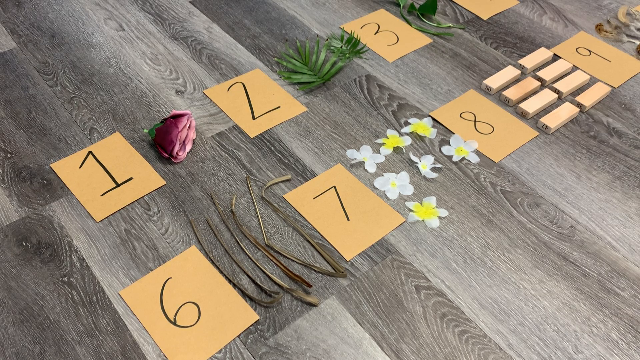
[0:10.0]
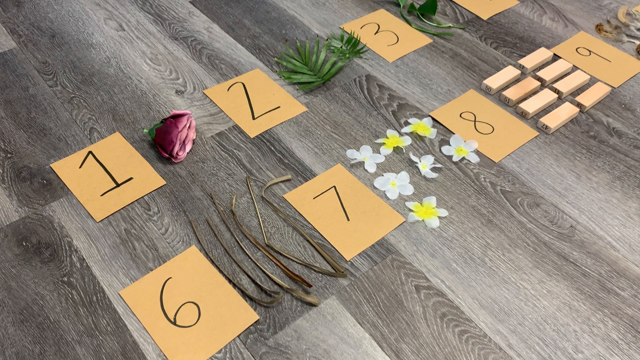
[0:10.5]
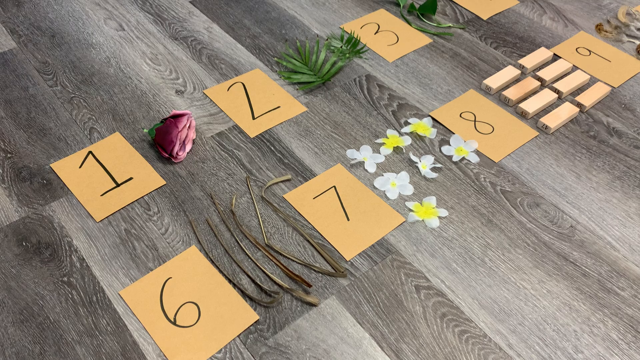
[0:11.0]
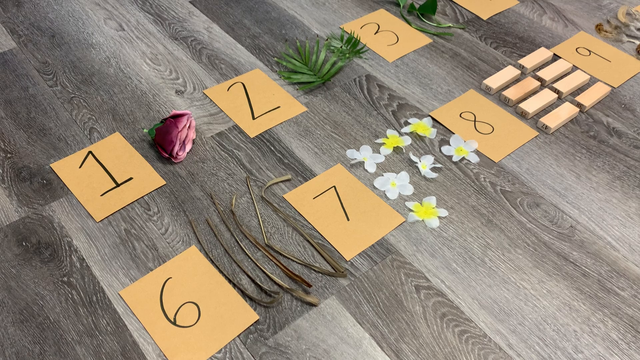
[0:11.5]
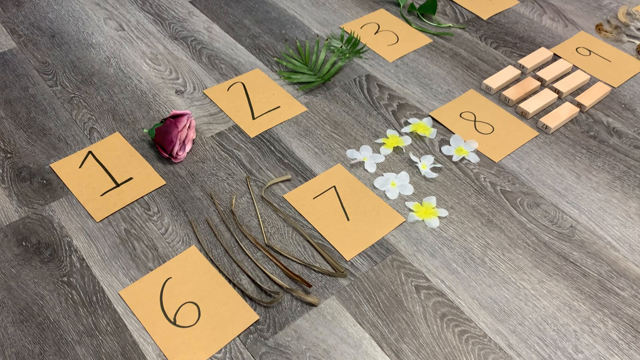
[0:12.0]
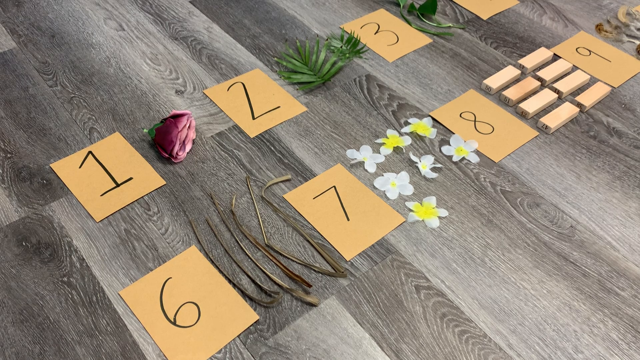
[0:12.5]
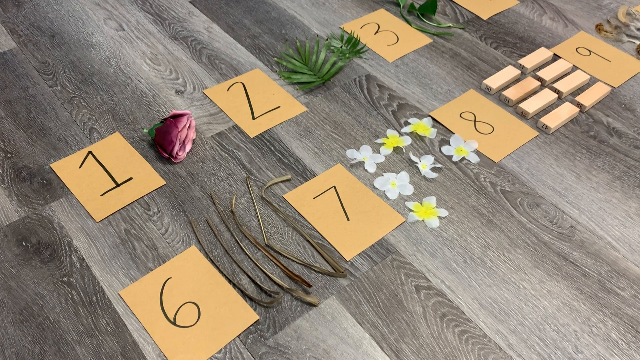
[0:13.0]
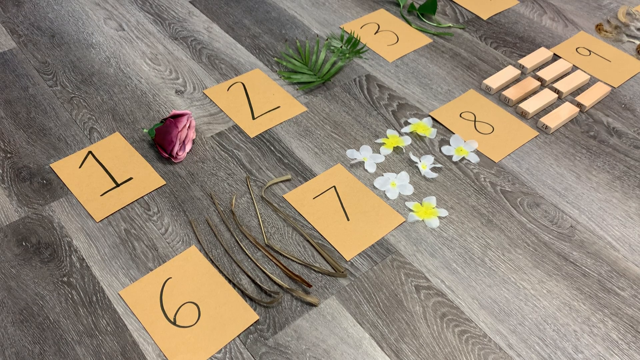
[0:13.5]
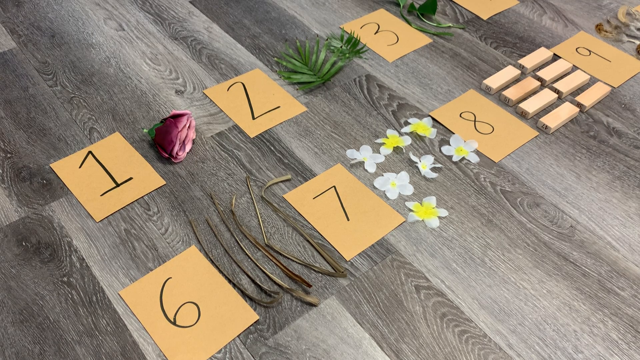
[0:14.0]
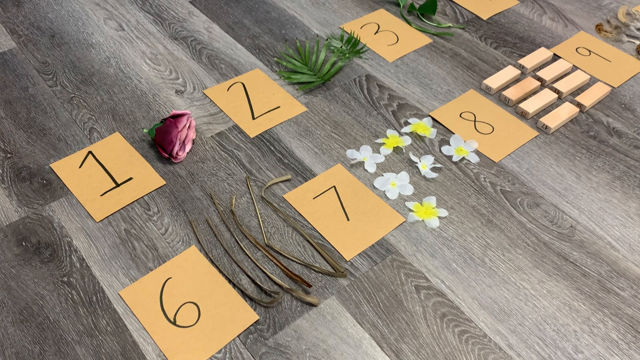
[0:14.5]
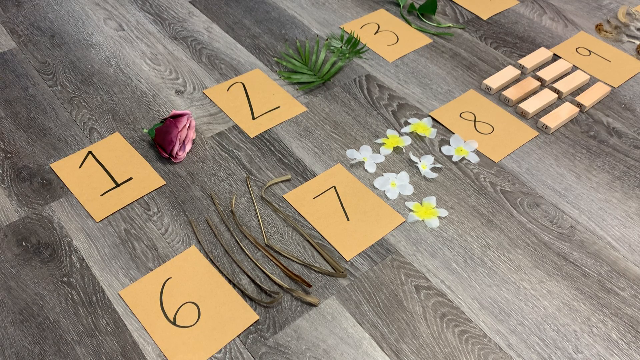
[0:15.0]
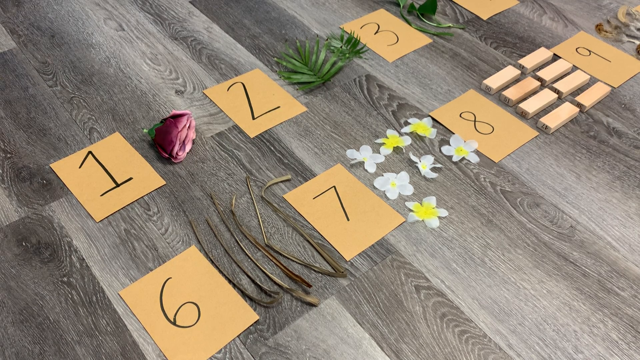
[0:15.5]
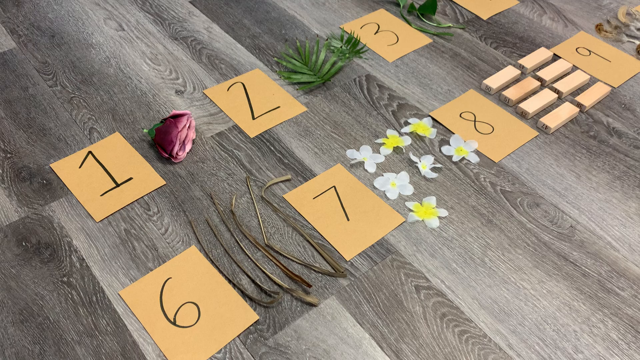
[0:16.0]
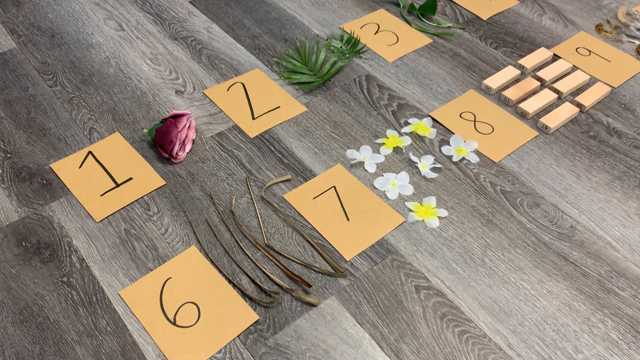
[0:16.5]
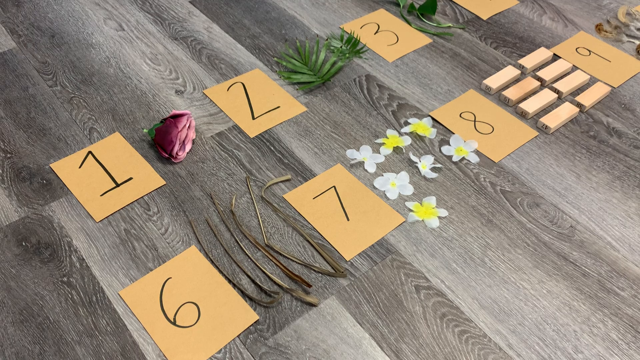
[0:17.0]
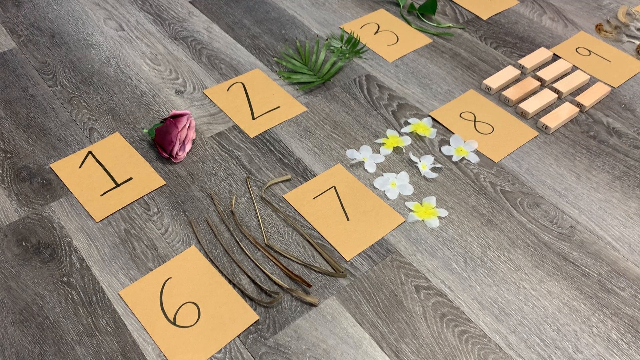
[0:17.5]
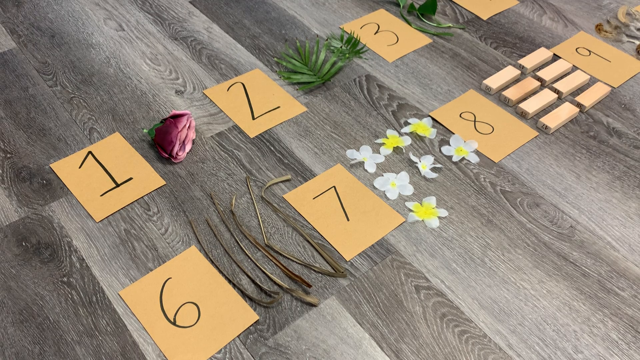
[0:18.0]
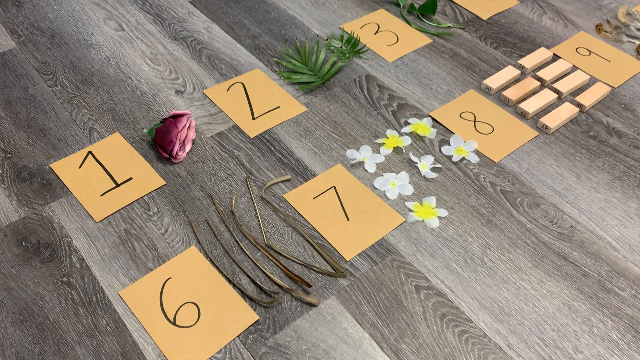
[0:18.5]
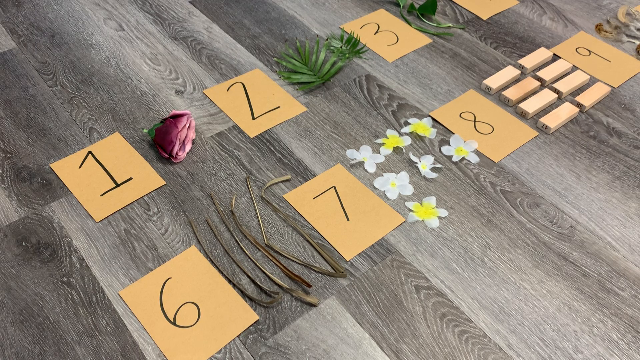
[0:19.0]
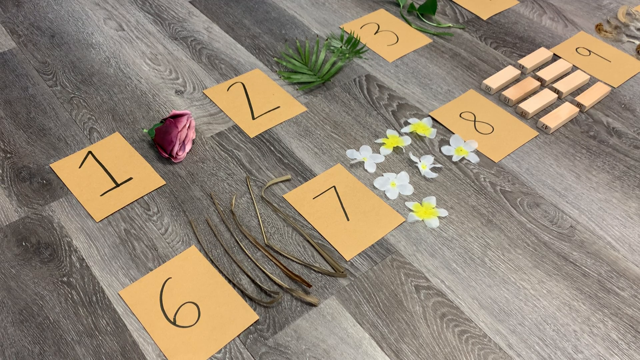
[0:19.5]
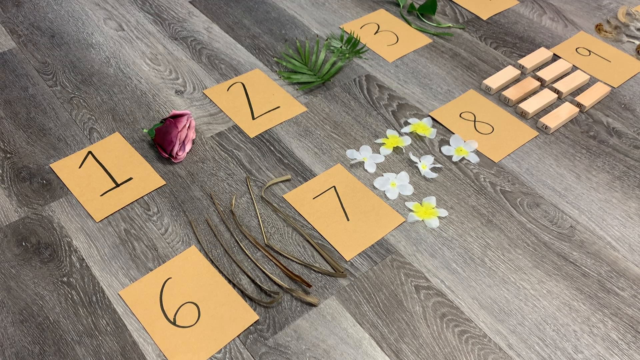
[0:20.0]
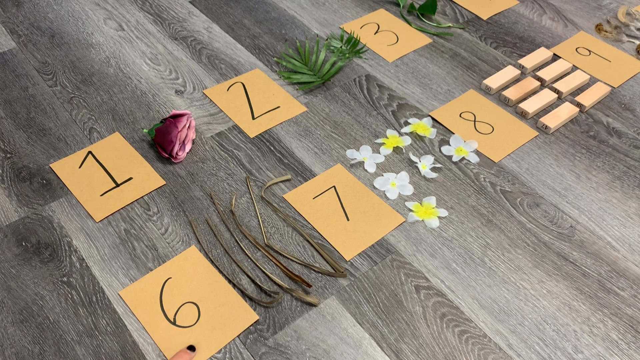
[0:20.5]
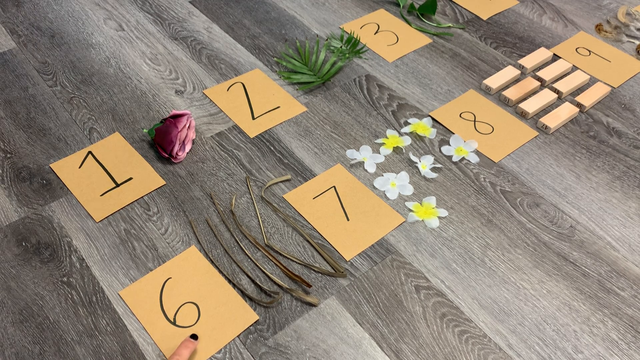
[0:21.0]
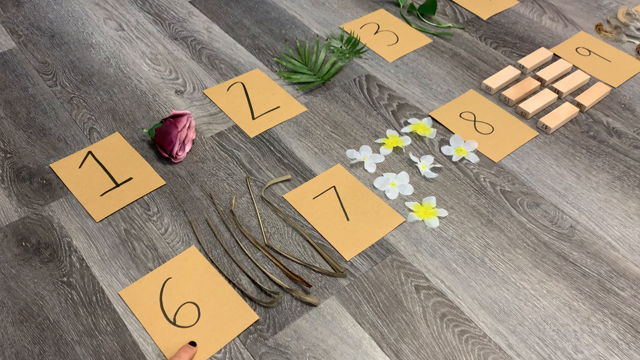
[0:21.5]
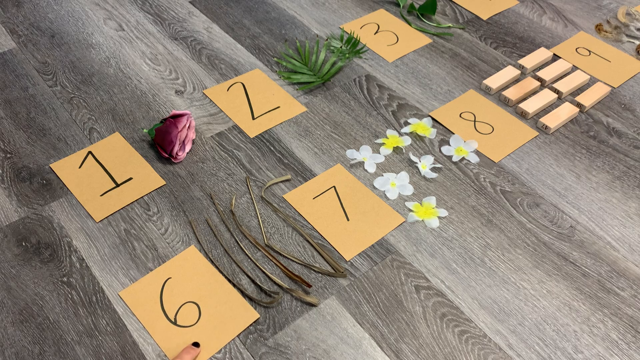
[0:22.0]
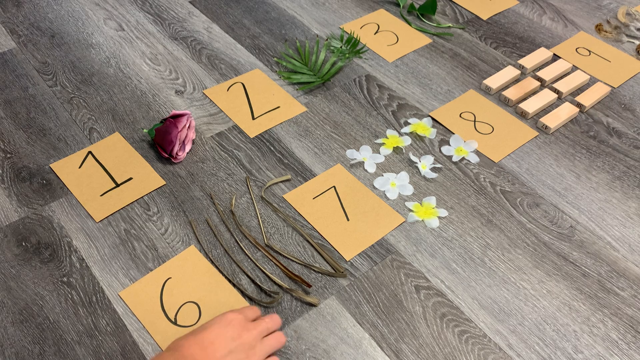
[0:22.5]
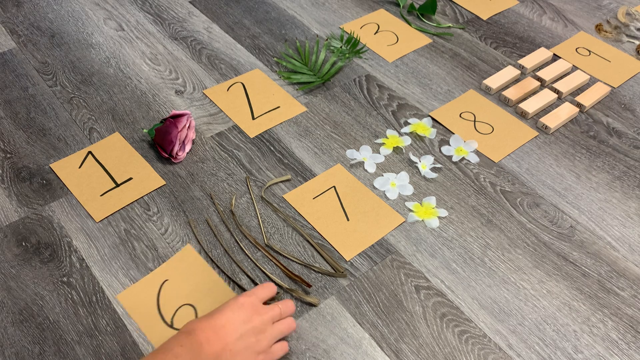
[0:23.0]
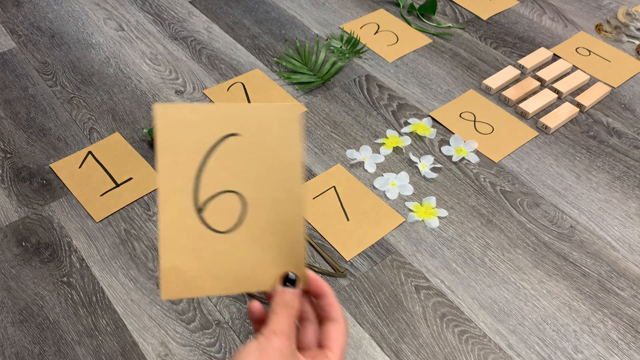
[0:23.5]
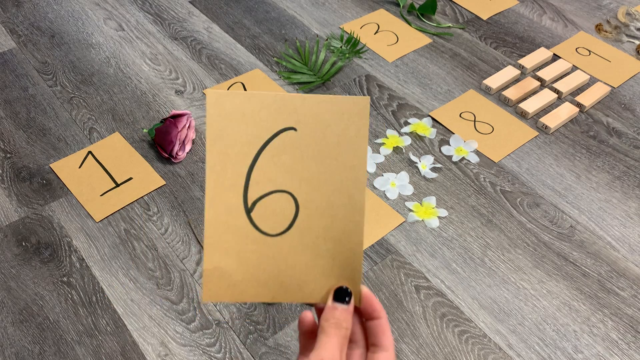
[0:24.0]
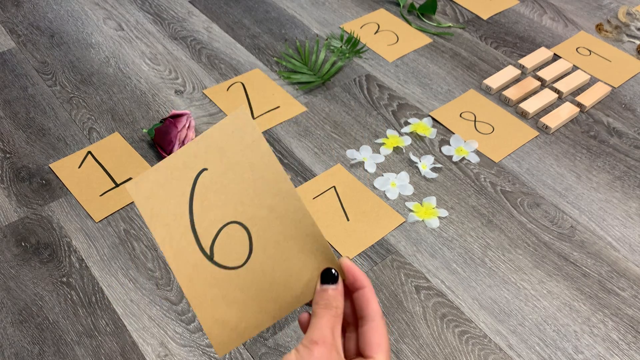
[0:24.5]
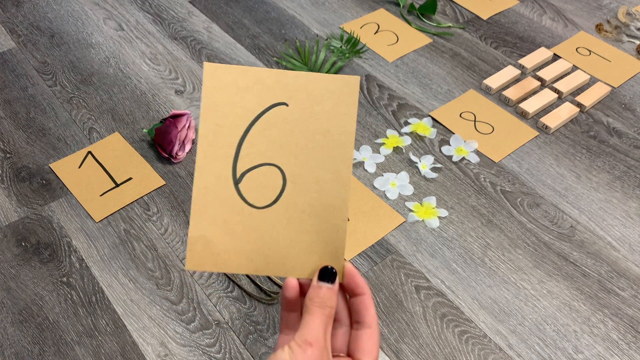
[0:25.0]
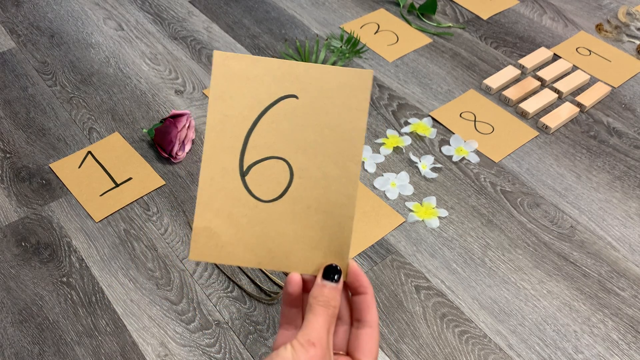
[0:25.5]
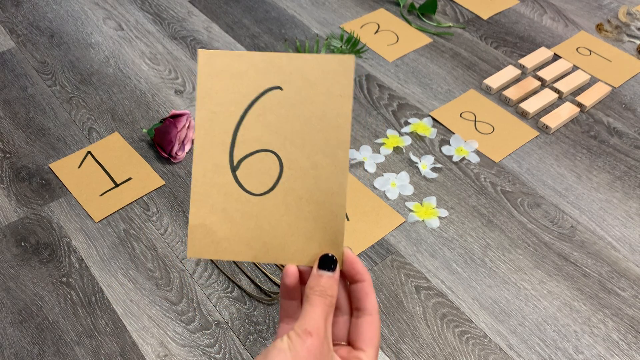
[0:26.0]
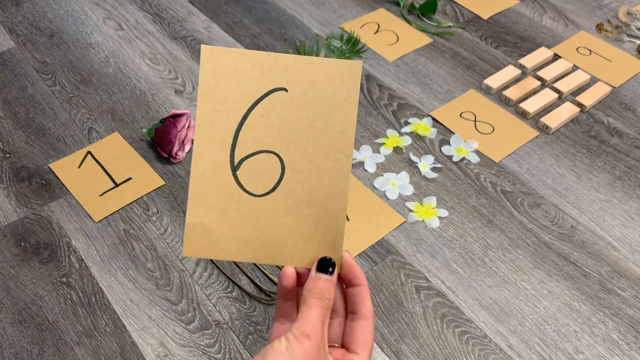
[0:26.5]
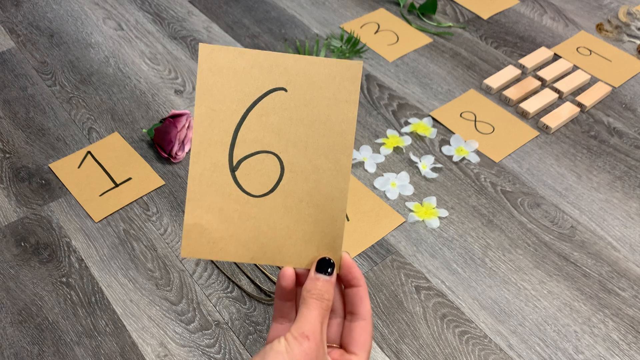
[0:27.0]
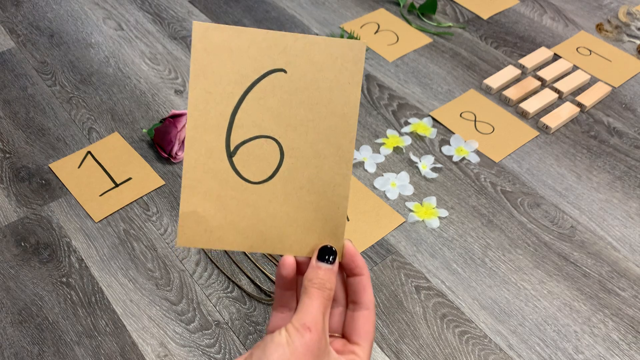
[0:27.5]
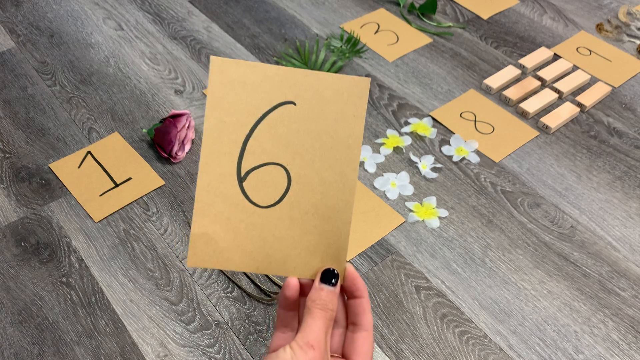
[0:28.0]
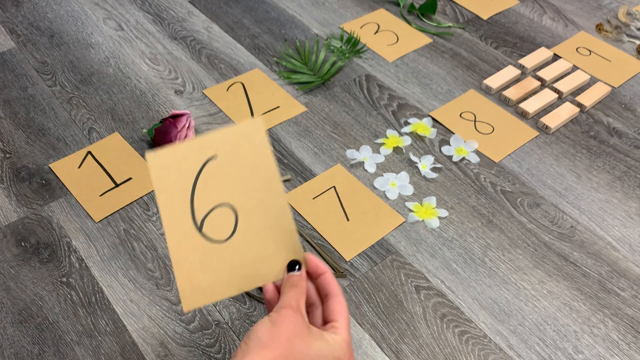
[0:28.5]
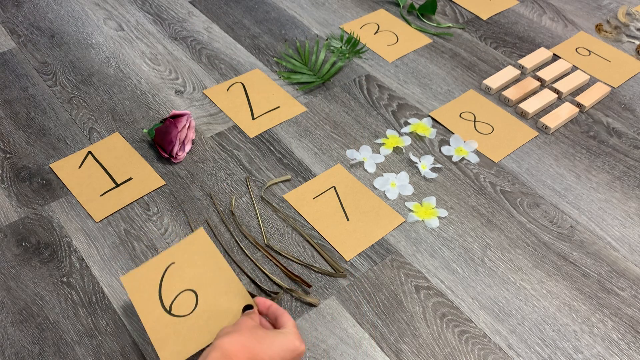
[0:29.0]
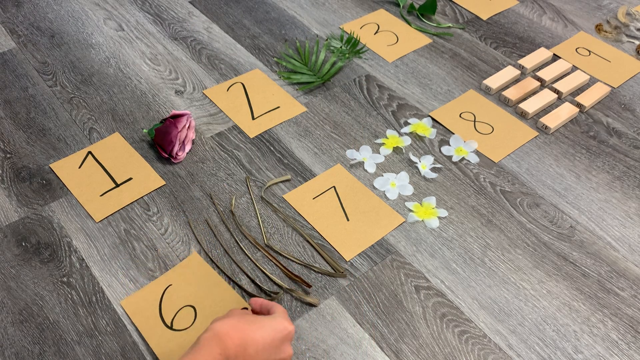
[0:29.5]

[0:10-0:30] For a while the scene stays exactly the same: the same items next to the same cards on the same floor. Then a human hand suddenly appears and taps on card number 6. The hand picks up card 6 and holds it towards the camera in the bottom right-hand corner of the frame, wiggling it around a bit whimsically. It then puts card 6 back down where it was, the hand disappears, and the scene returns to how it was.